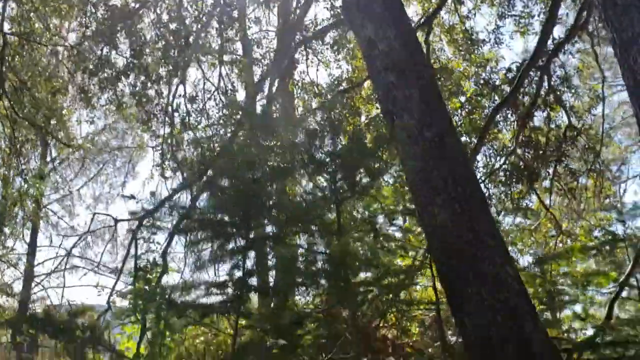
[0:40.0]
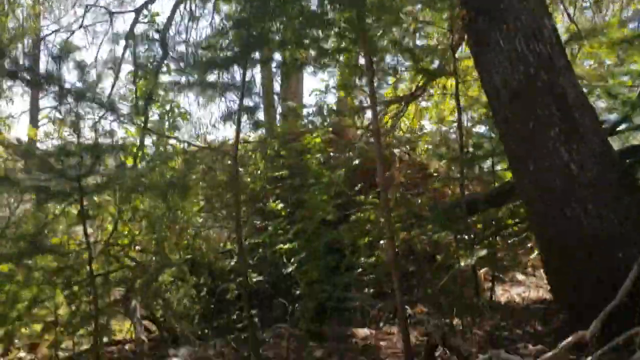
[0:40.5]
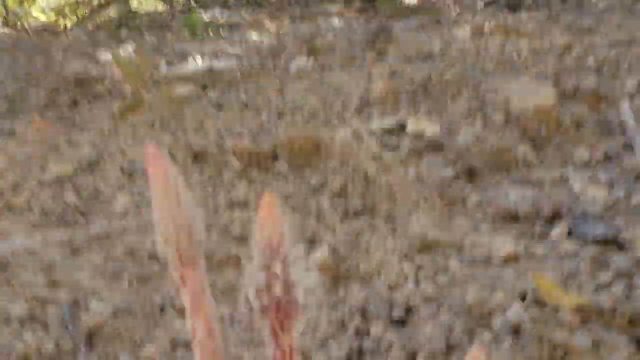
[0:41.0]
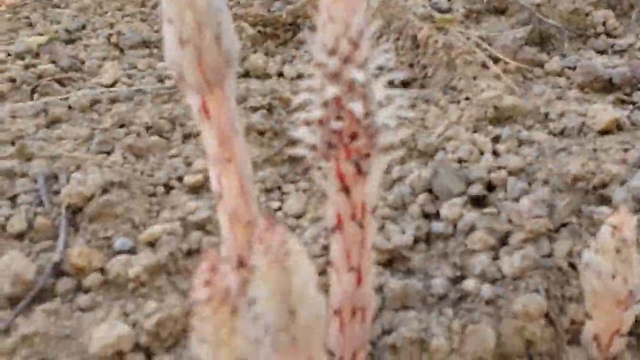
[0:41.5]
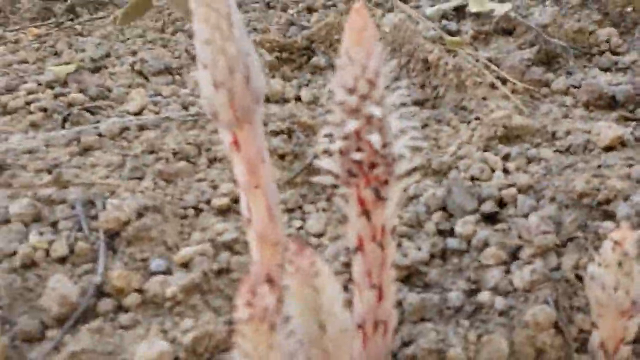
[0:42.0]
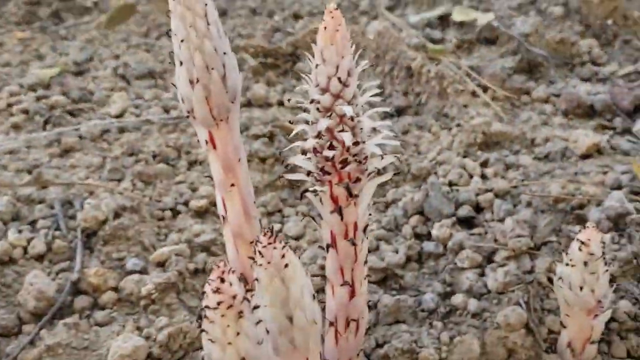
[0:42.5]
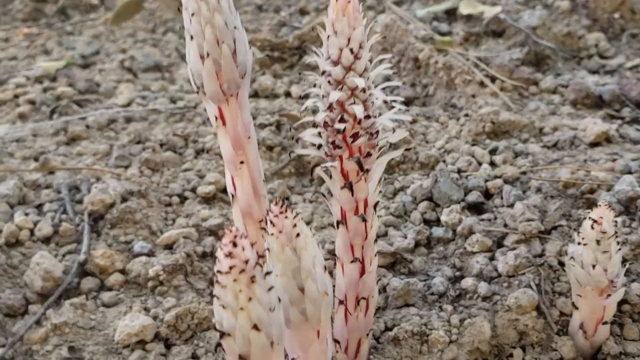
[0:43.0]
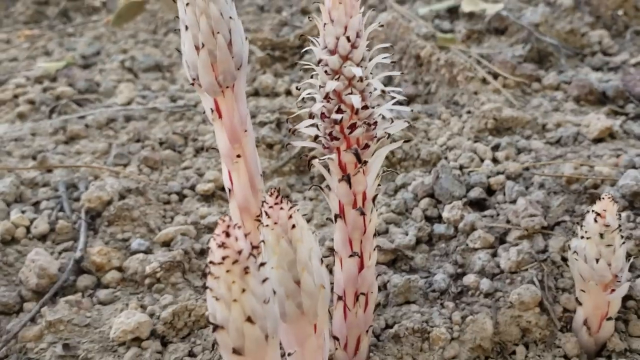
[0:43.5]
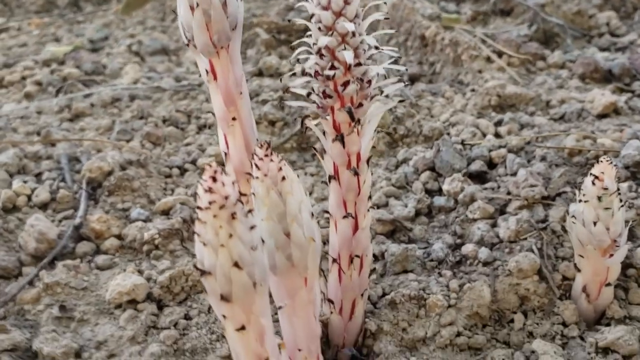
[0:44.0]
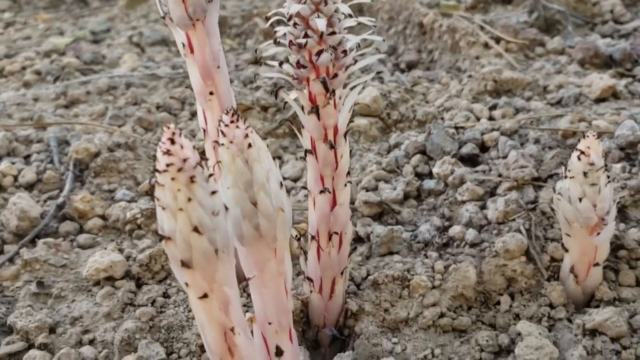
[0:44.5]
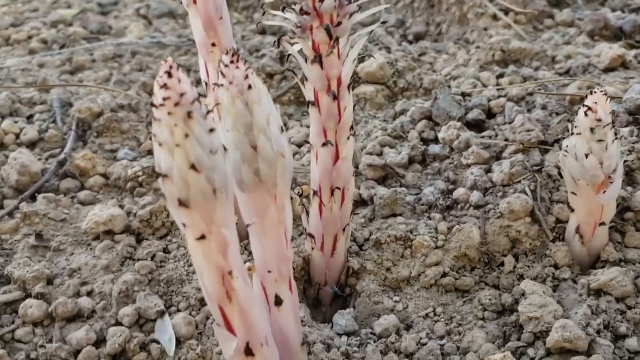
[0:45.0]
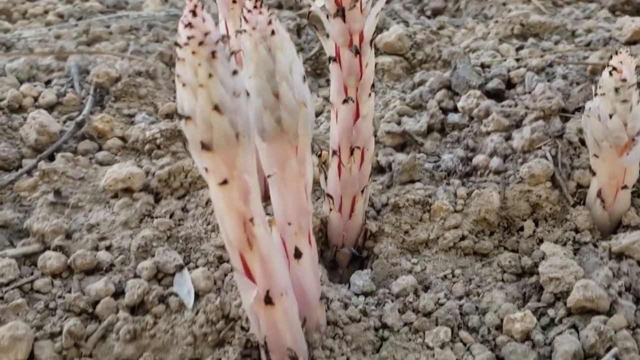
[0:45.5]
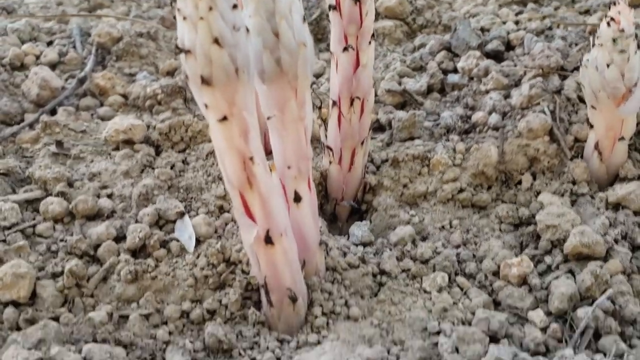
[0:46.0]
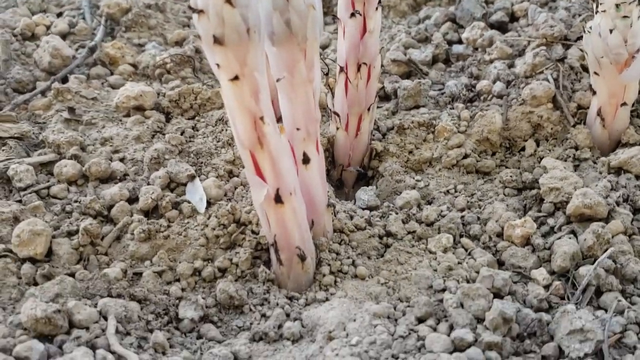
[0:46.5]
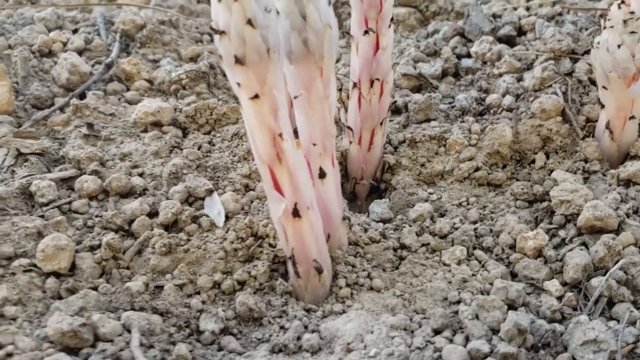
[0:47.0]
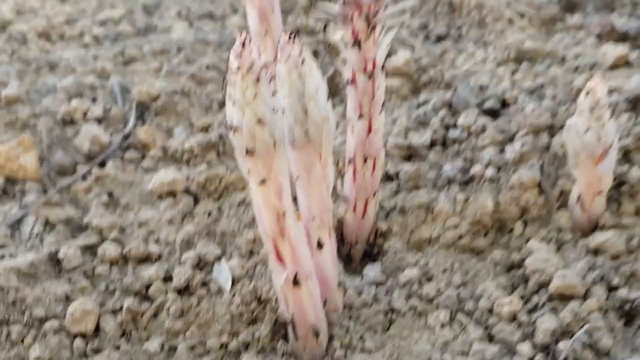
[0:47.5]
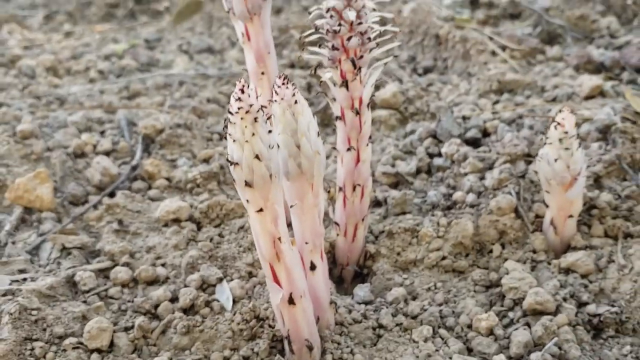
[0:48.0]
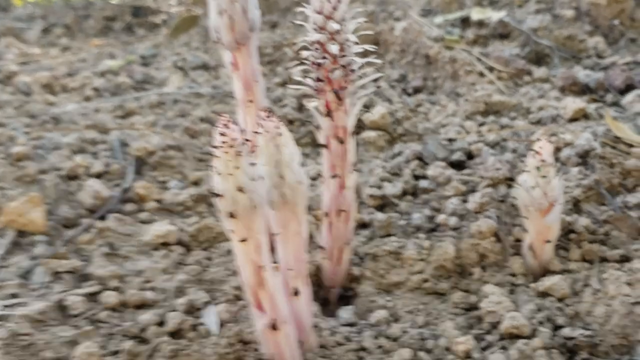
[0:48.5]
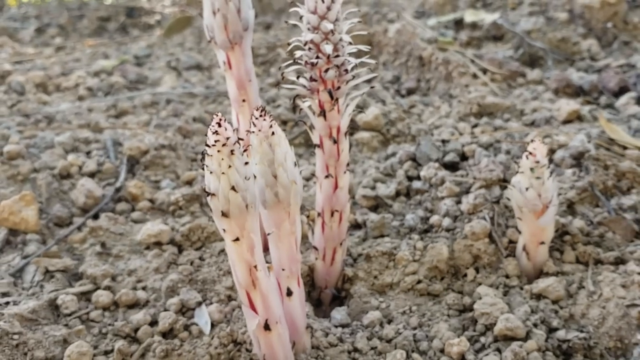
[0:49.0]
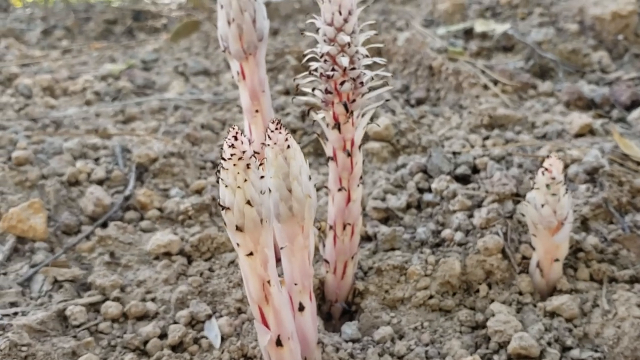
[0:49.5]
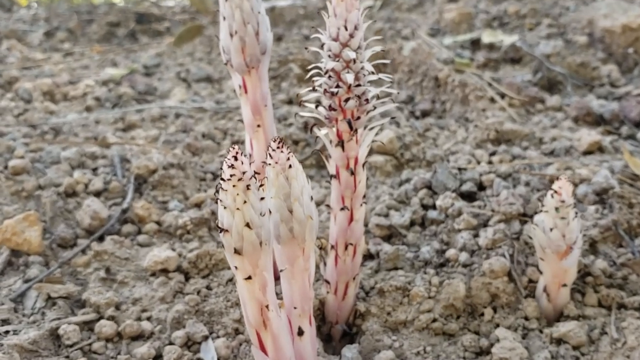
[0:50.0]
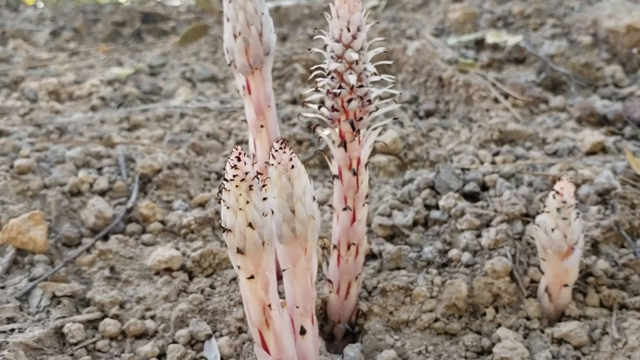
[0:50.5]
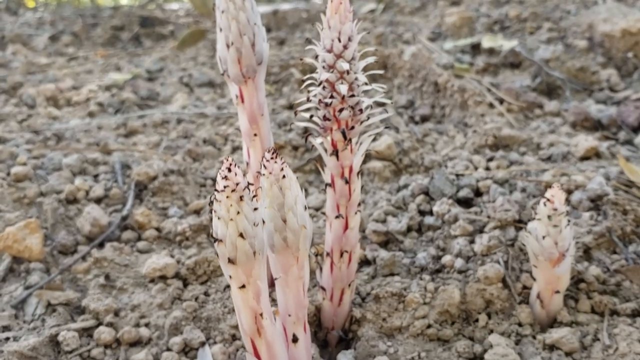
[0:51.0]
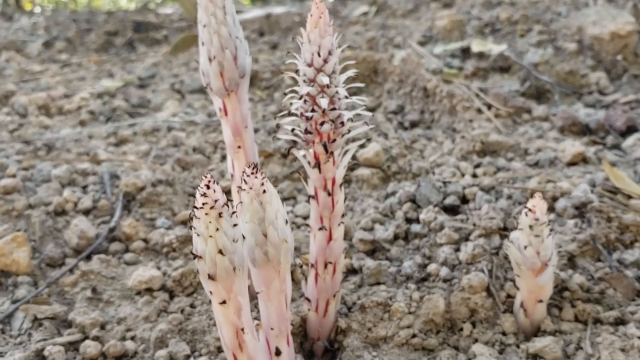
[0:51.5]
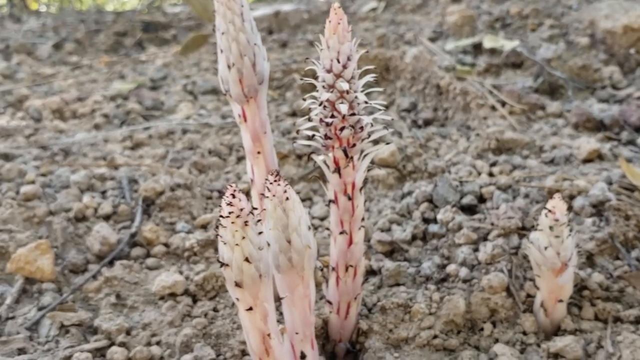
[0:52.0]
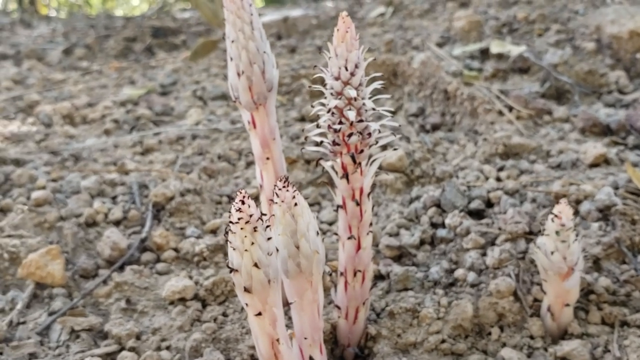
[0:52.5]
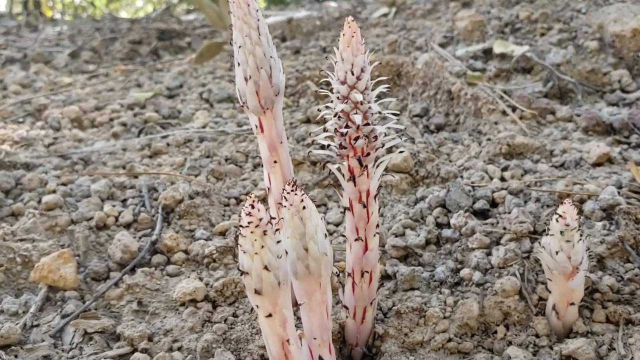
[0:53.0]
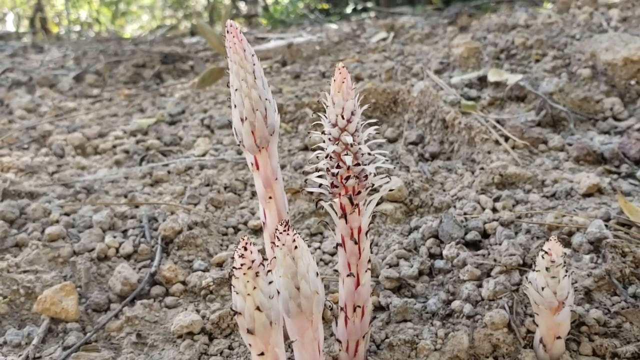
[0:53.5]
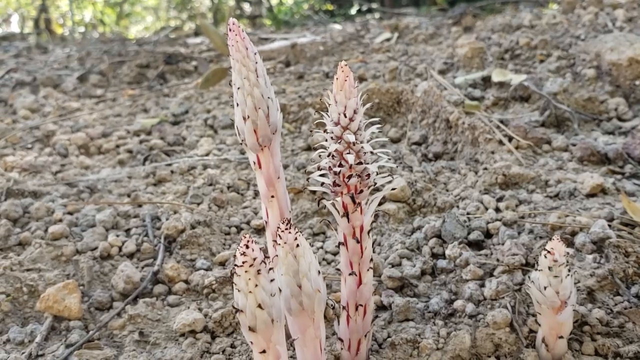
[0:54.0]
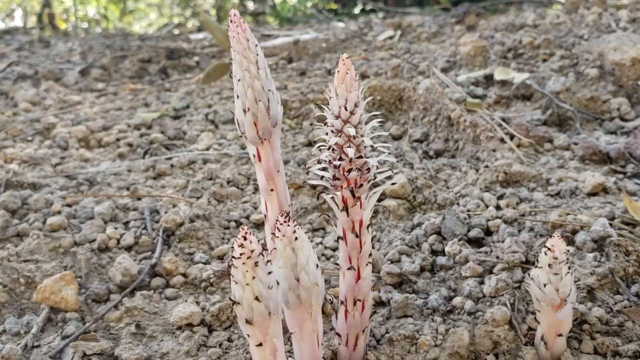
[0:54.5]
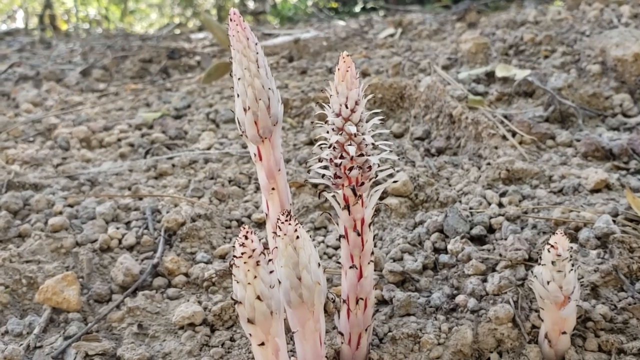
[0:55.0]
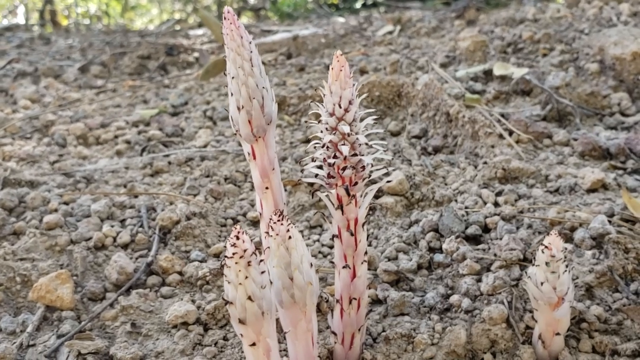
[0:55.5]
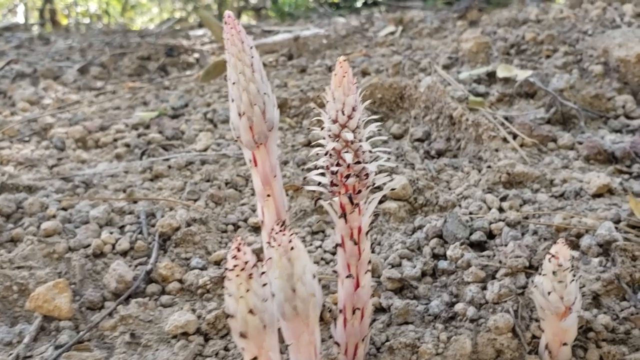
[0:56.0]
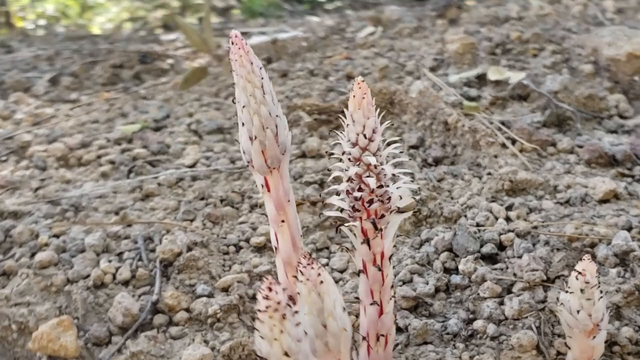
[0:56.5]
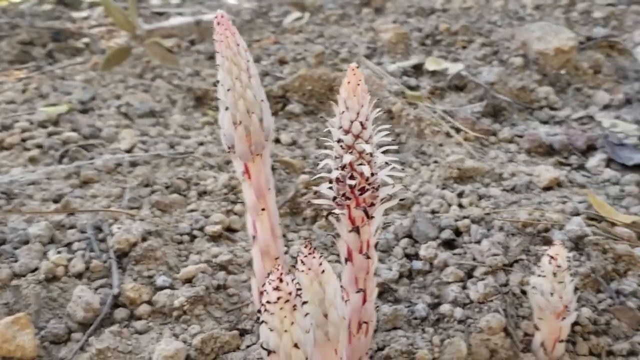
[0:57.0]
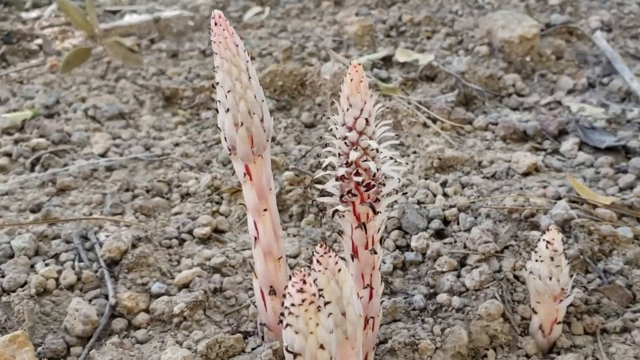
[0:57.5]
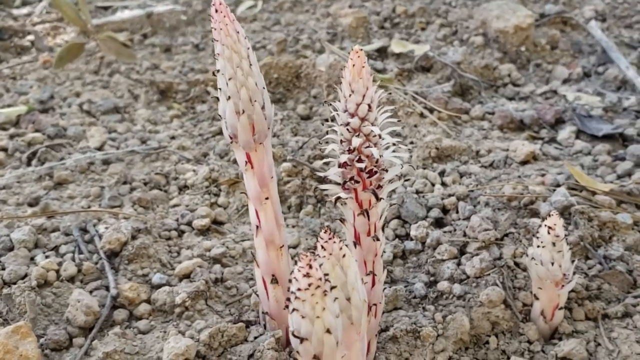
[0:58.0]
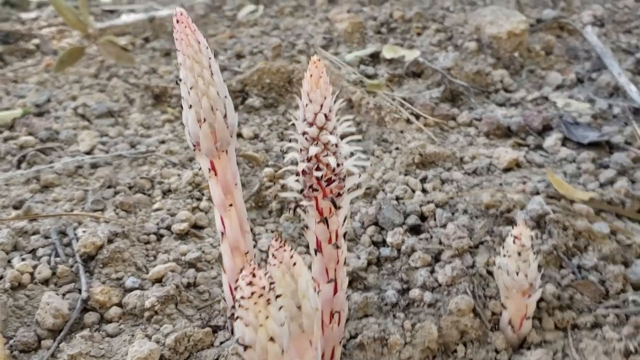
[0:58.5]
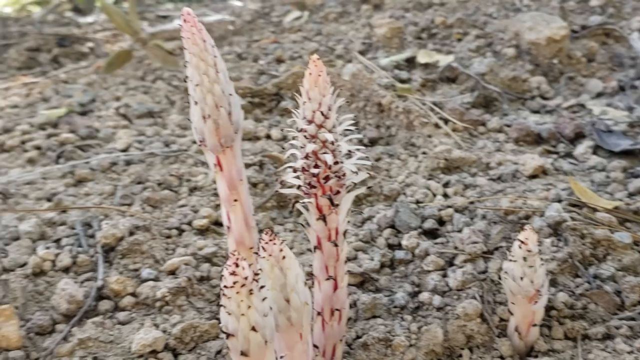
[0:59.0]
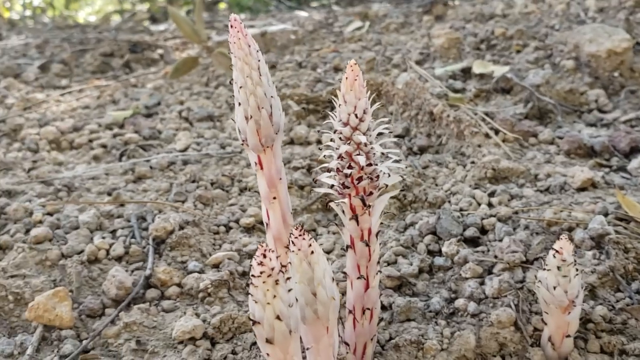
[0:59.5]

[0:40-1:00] The sky and the plant are shown again. The plant is peach in color with thorns and spikes of red color; it is a plant in the woods, in its natural habitat, with sunshine on it. The plant is still in view, showing its peach color with thorns around it, and then the sky, the vegetation and the woods are shown.